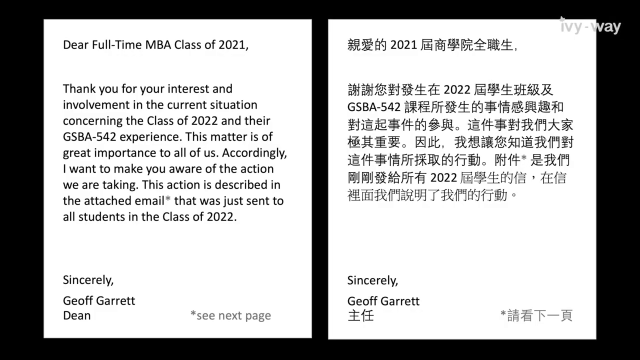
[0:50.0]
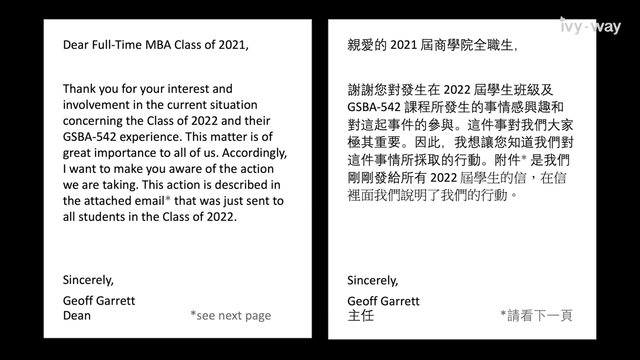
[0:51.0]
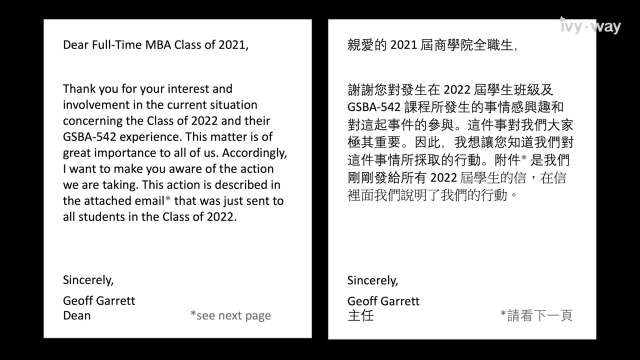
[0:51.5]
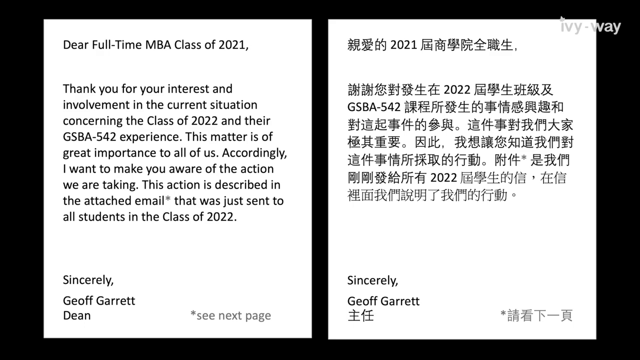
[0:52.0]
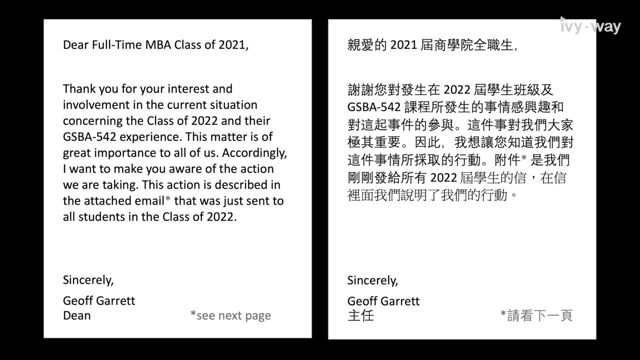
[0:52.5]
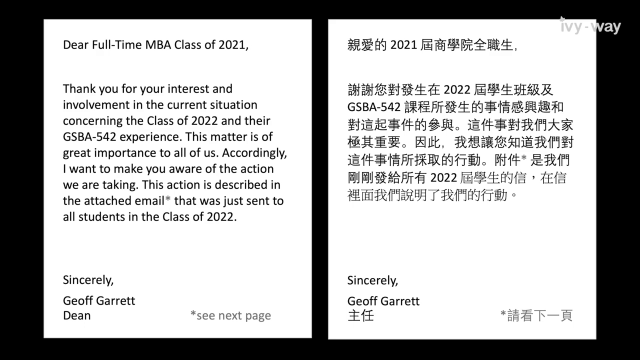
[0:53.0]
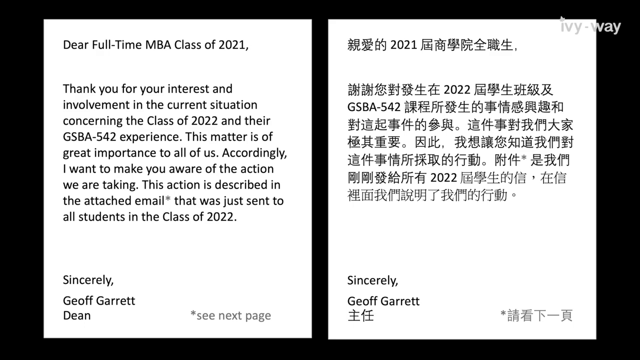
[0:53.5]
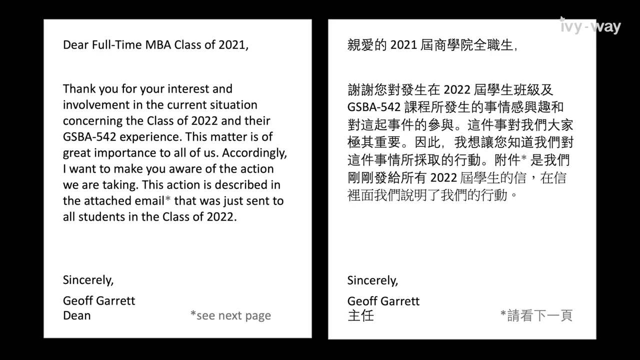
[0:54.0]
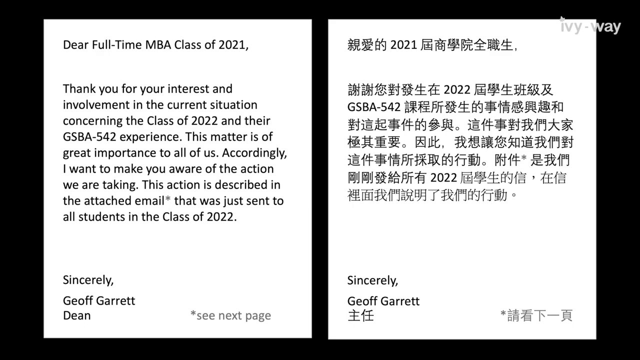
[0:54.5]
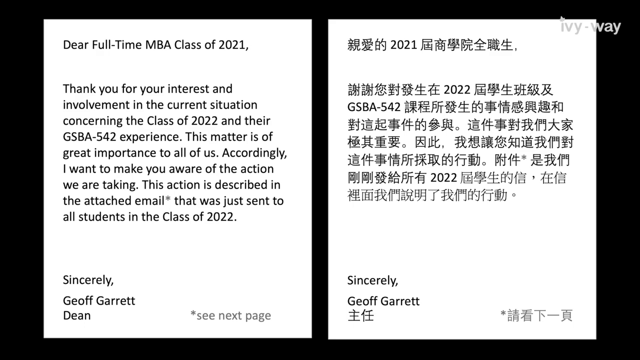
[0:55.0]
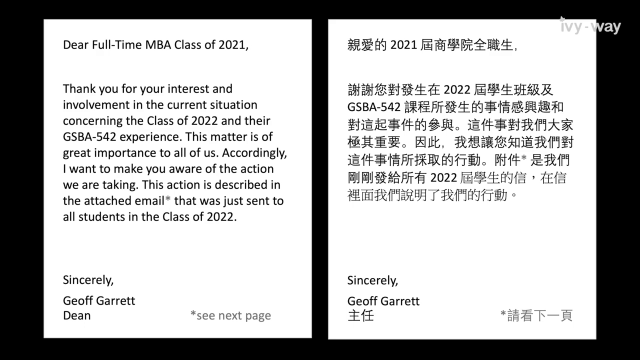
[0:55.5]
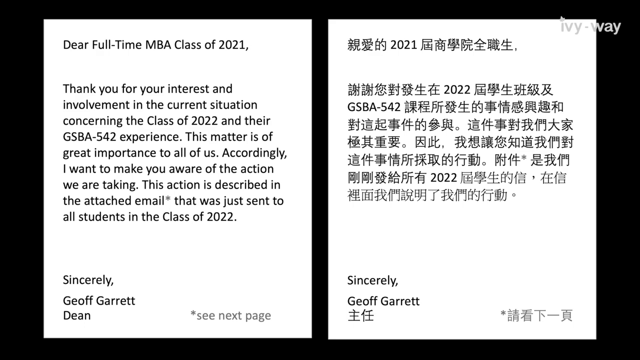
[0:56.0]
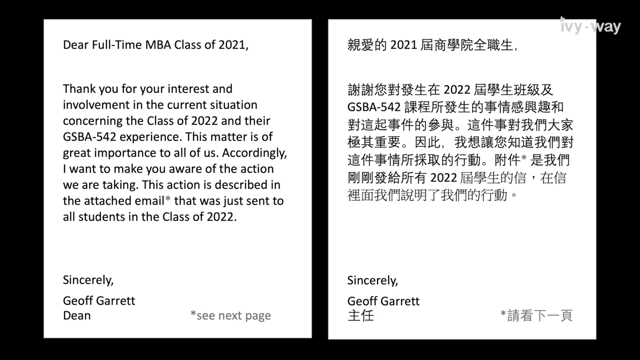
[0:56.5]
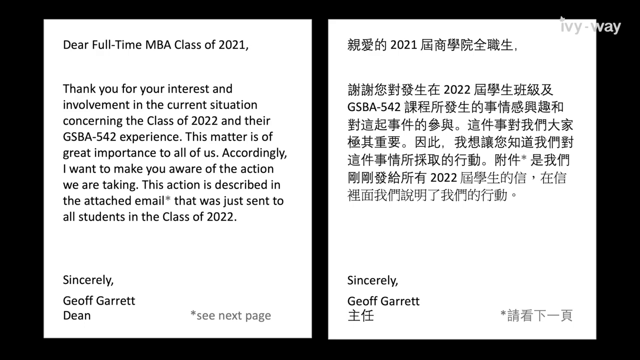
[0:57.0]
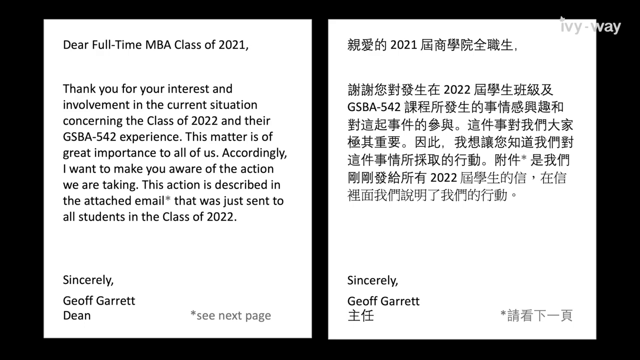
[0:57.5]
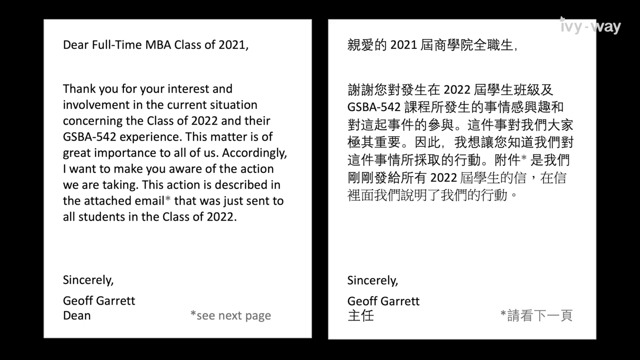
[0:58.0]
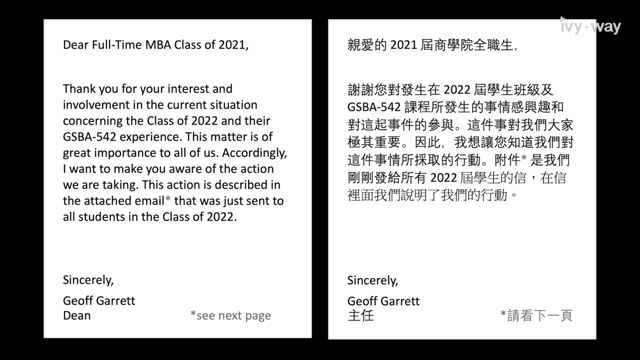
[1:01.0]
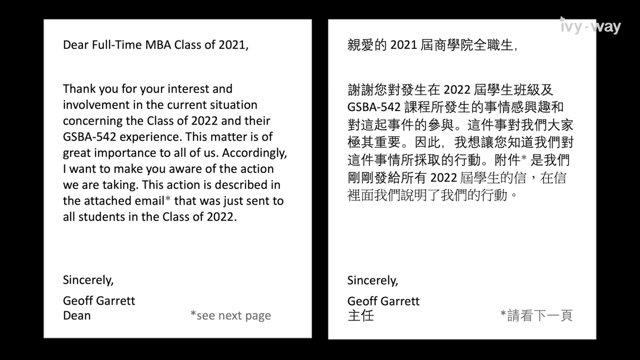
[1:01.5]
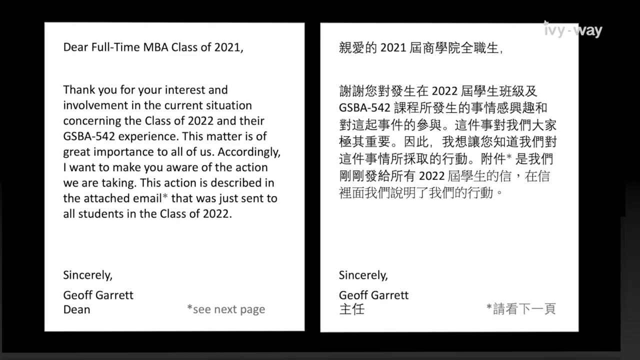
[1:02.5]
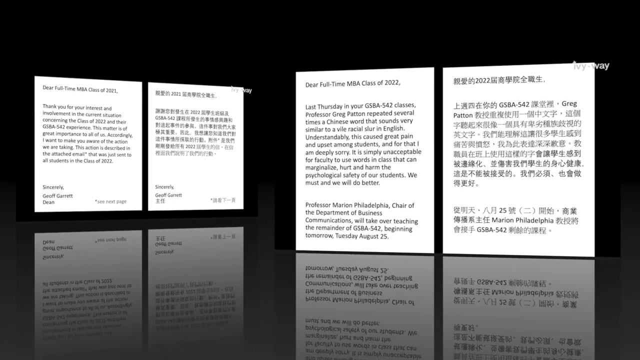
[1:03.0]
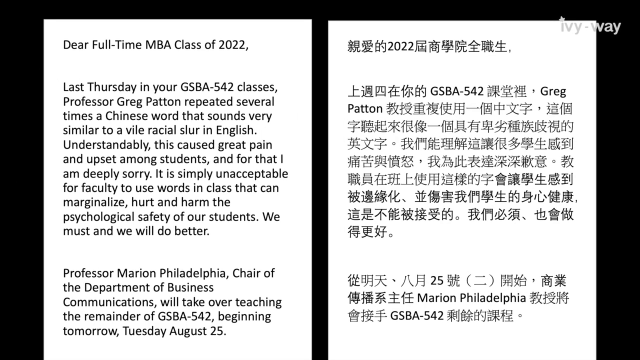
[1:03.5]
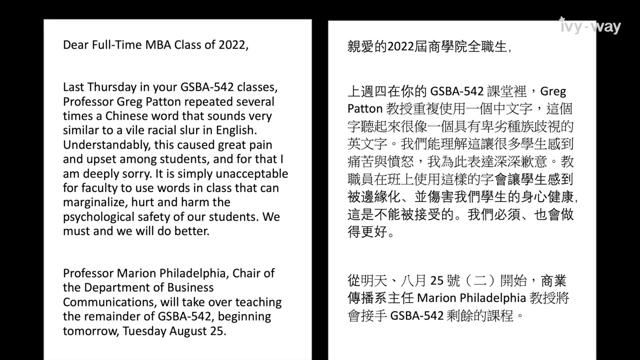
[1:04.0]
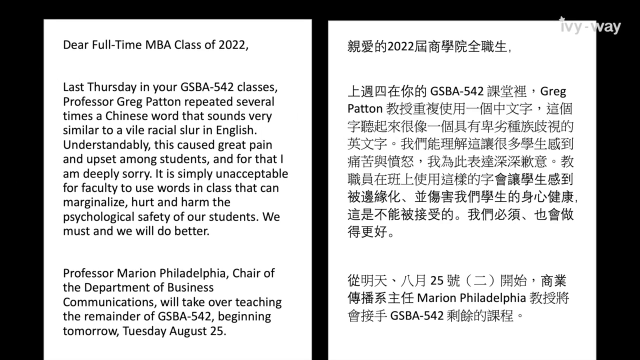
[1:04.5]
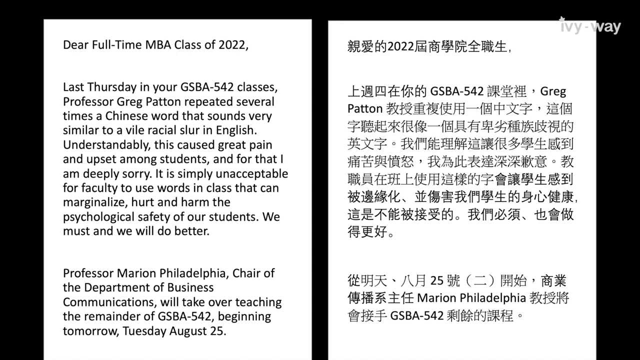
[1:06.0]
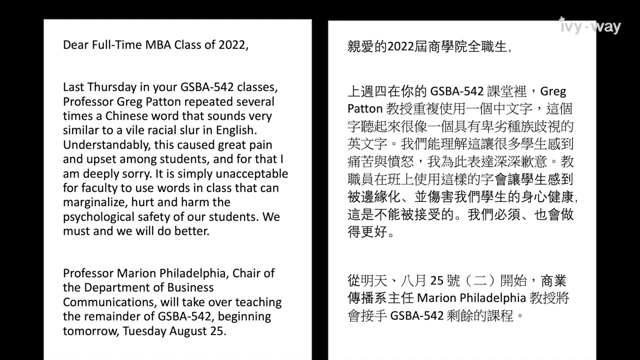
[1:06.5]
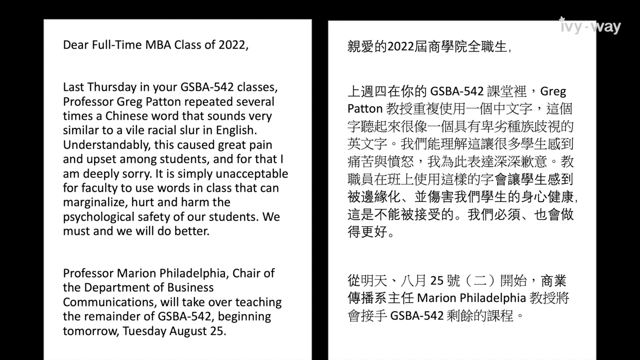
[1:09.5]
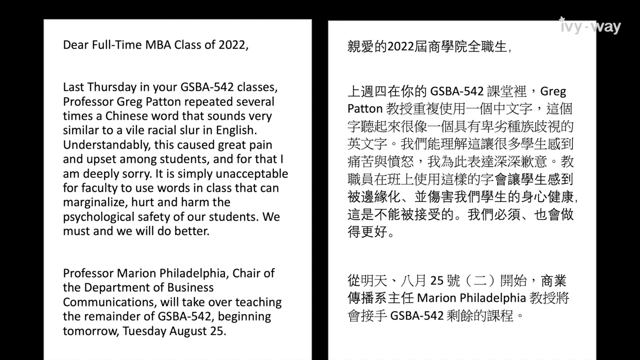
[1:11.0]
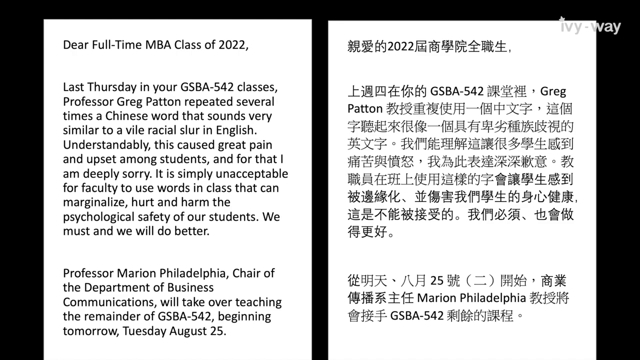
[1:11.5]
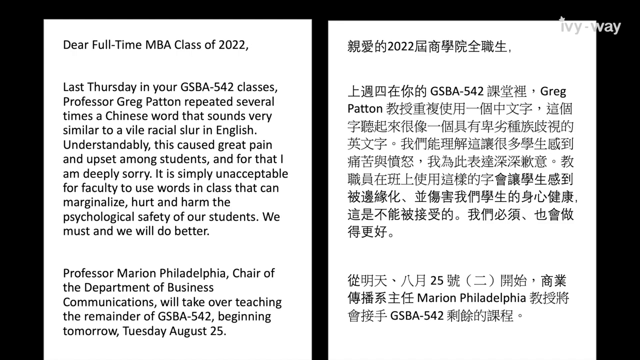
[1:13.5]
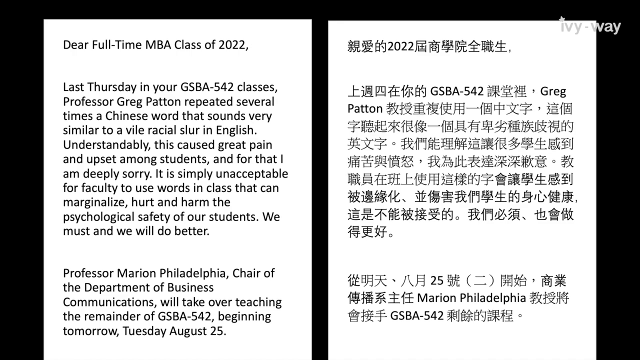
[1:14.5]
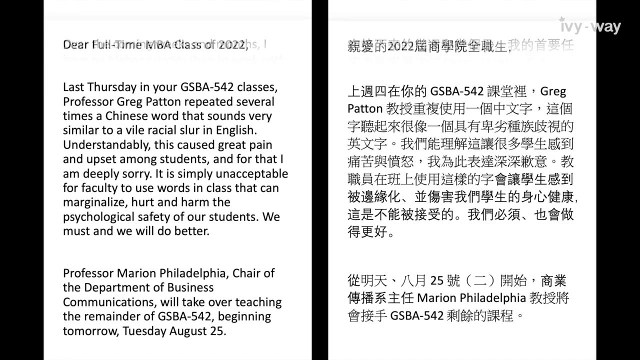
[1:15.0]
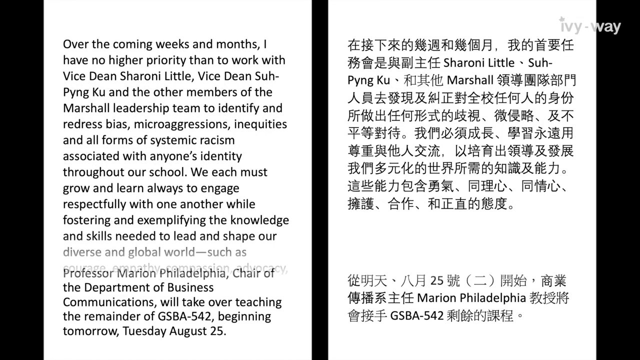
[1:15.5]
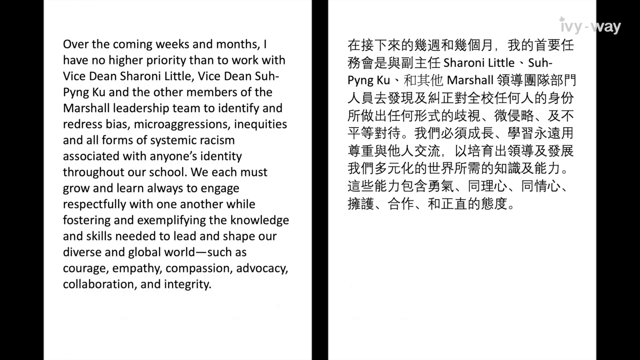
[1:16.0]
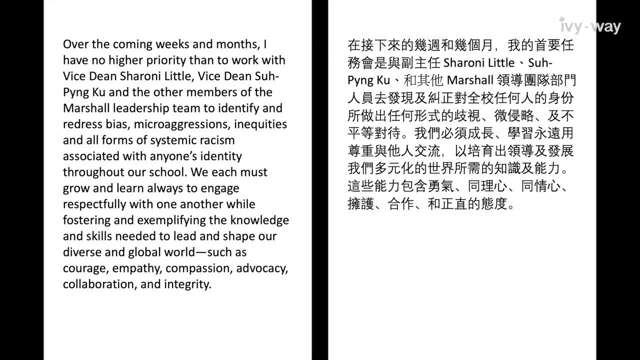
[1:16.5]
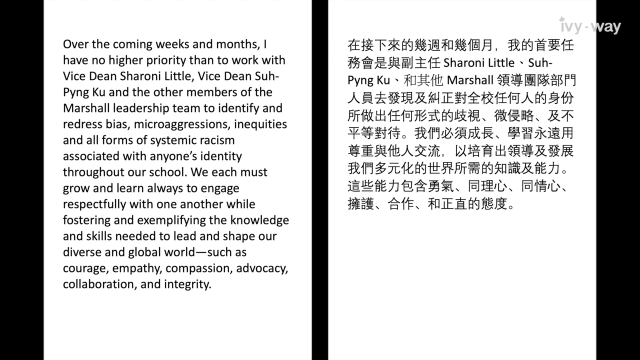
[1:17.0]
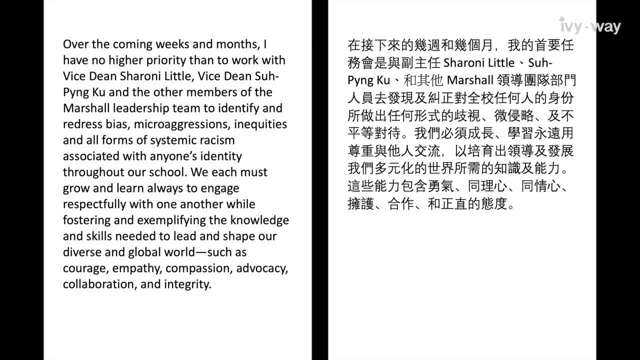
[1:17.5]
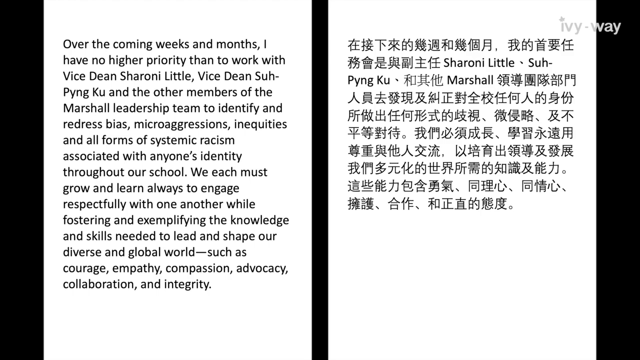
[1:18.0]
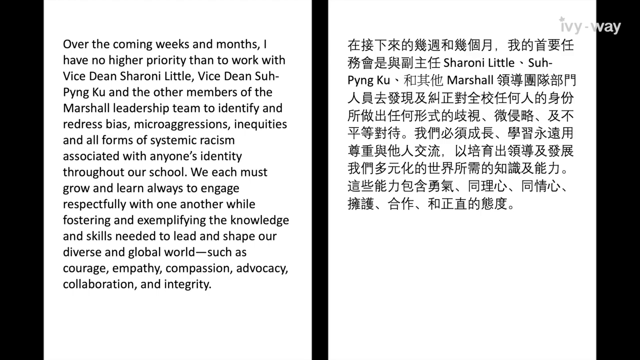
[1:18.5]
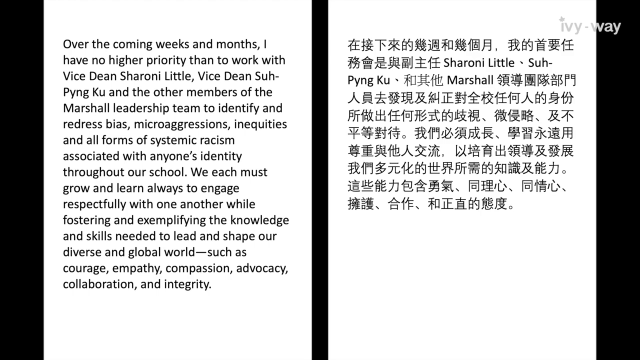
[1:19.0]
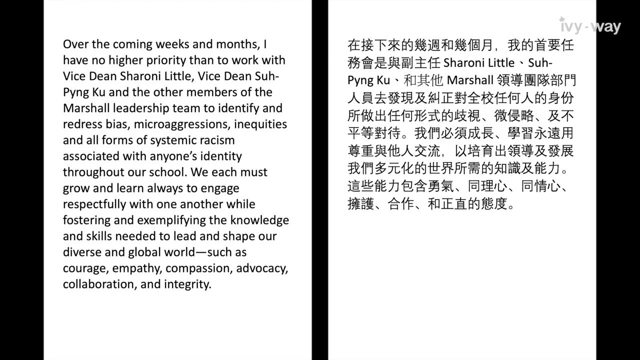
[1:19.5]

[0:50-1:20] Two letters appear on the screen side by side: the one on the left is written in English and the one on the right in Chinese, allowing a direct comparison of the translations. The English letter reads: "Dear full-time MBA class of 2021, Thank you for your interest and involvement in the current situation concerning the class of 2022 and their GSBA 542 experience. This matter is of great importance to all of us. Accordingly, I want to make you aware of the action we are taking. This action is described in the attached email that was just sent to all students in the class of 2022. Sincerely, Jeff Garrett, Dean." Two more letters then come up on the screen, again with English on the left and Chinese on the right; this one is written by Professor Marion Philadelphia, Chair of the Department of Business Communications.